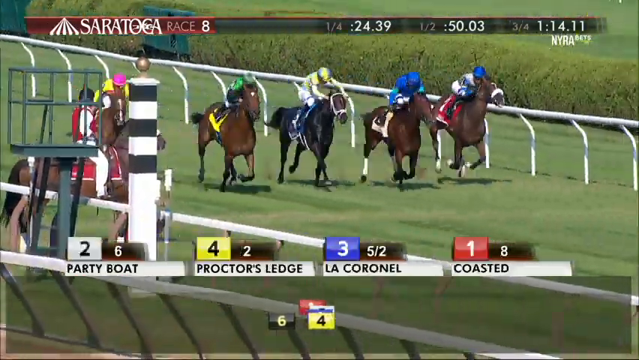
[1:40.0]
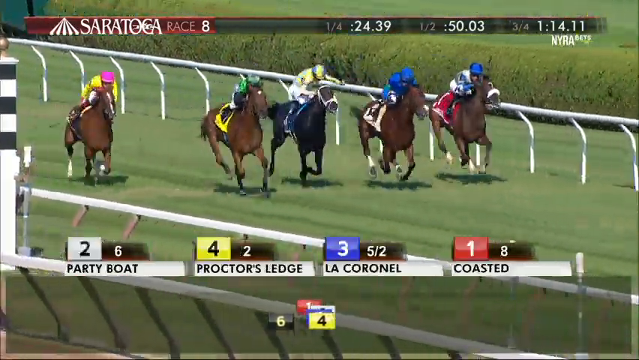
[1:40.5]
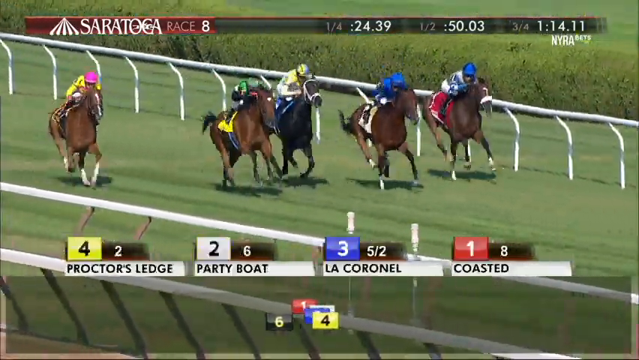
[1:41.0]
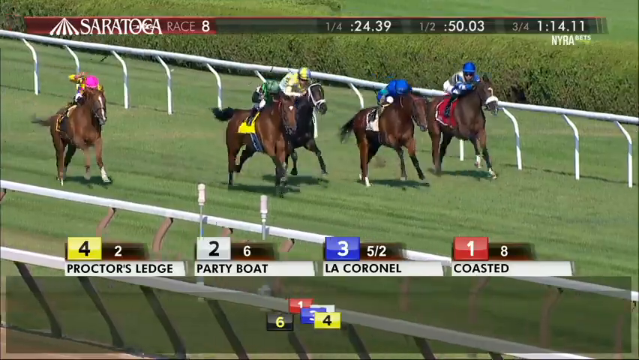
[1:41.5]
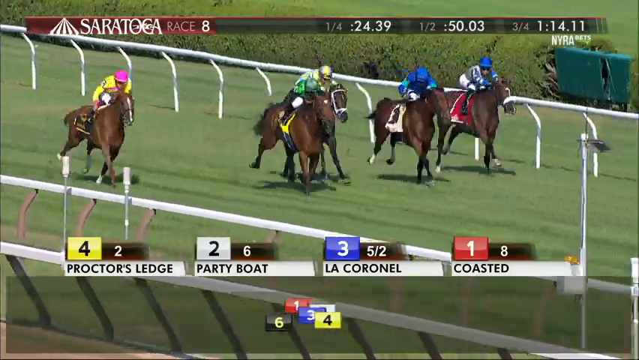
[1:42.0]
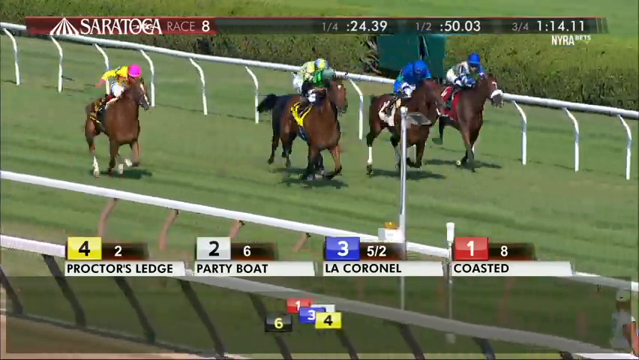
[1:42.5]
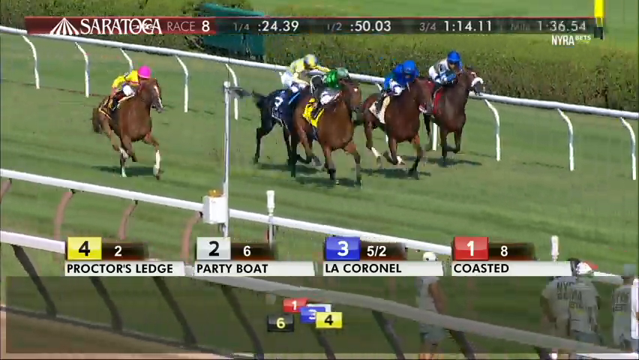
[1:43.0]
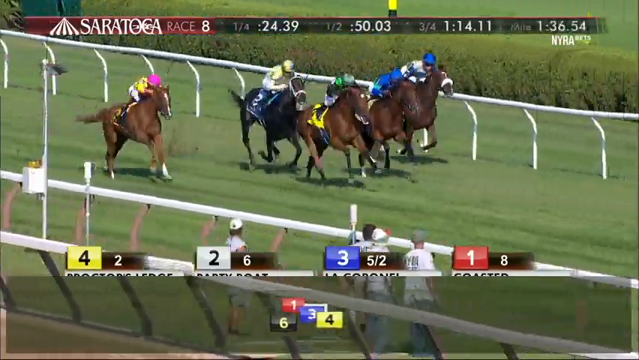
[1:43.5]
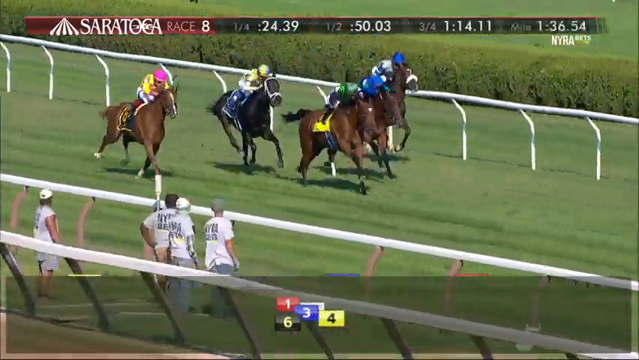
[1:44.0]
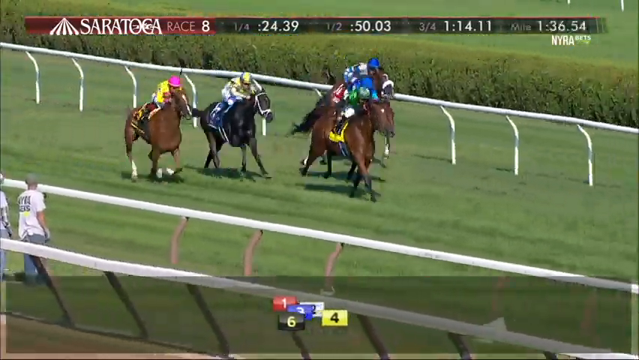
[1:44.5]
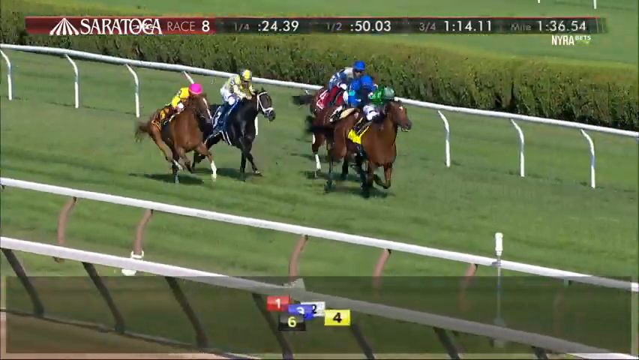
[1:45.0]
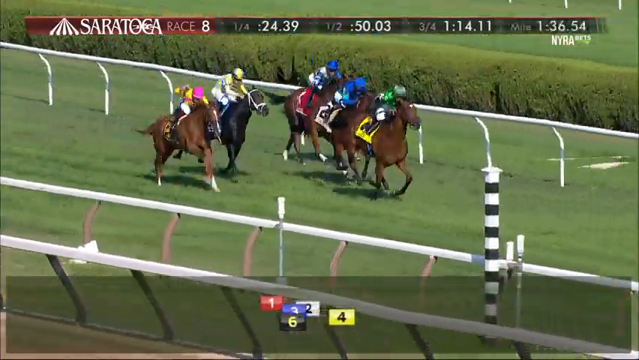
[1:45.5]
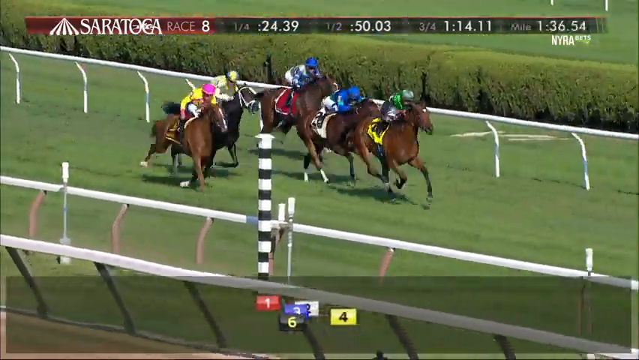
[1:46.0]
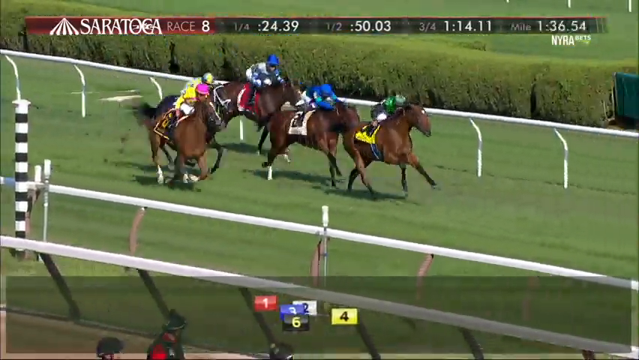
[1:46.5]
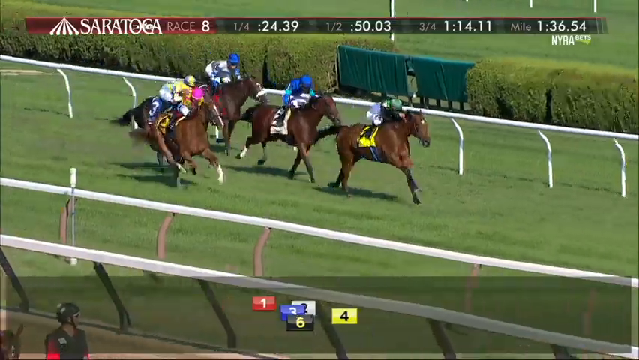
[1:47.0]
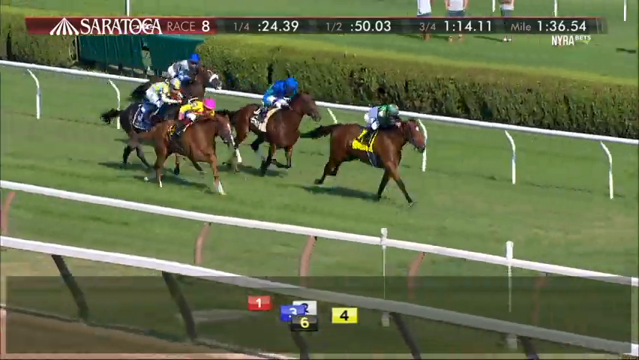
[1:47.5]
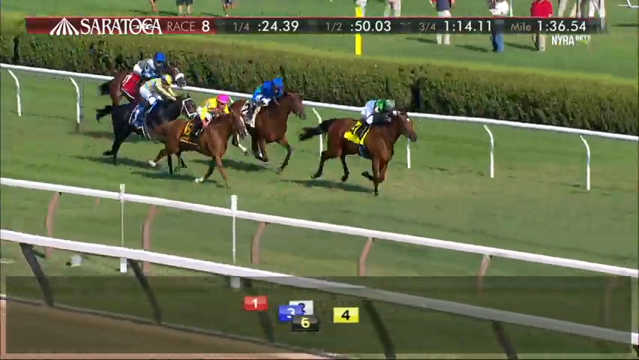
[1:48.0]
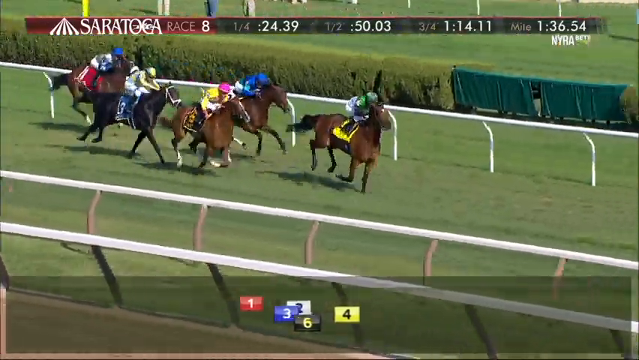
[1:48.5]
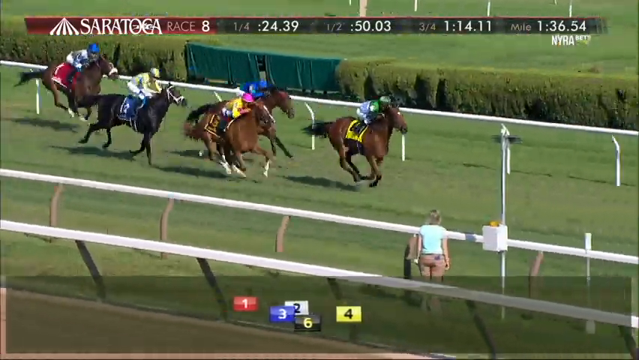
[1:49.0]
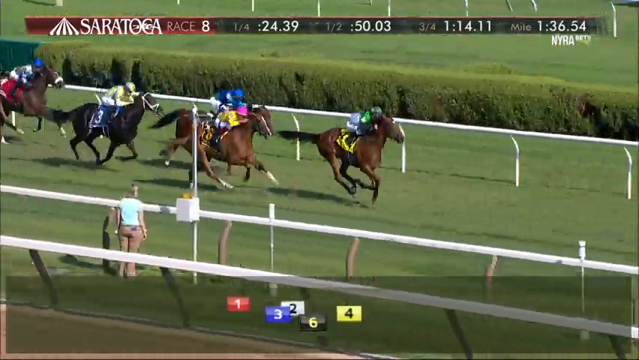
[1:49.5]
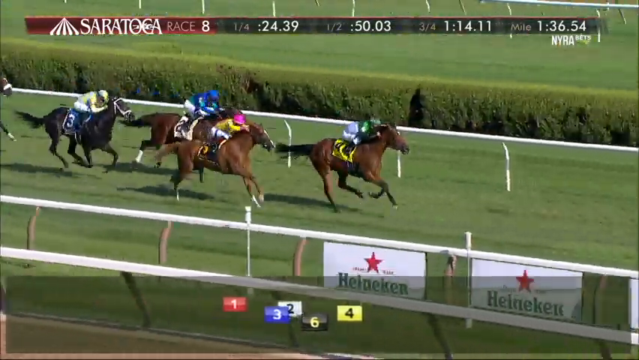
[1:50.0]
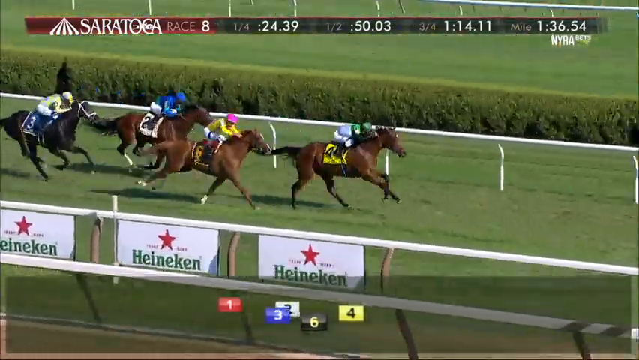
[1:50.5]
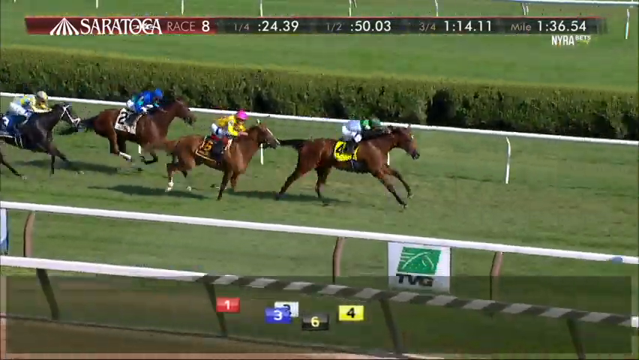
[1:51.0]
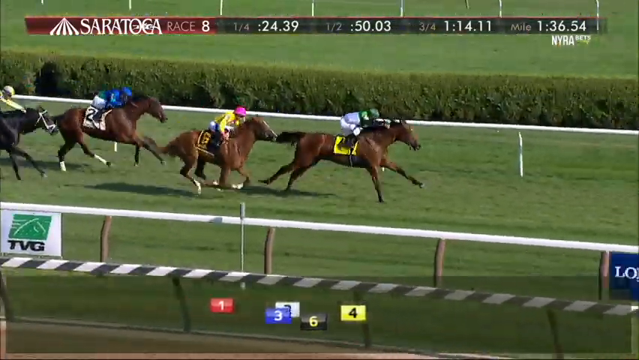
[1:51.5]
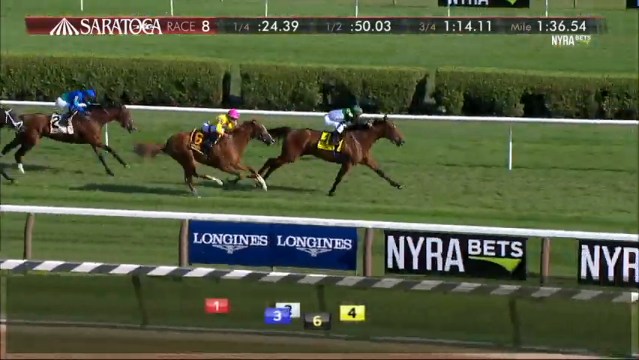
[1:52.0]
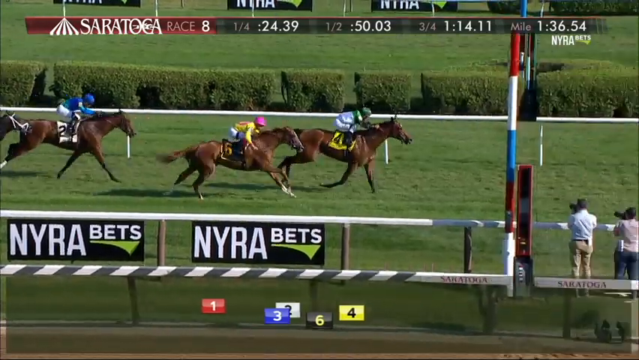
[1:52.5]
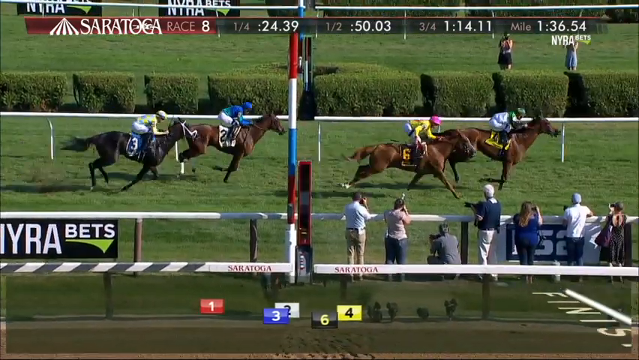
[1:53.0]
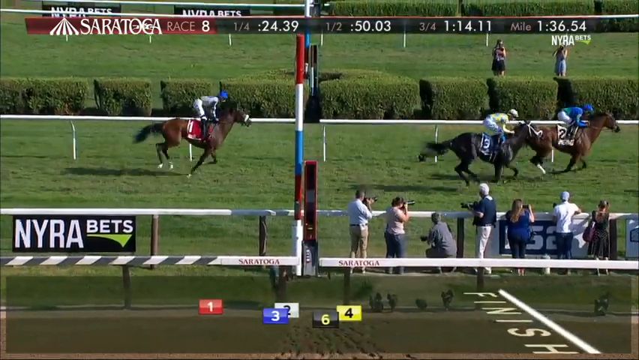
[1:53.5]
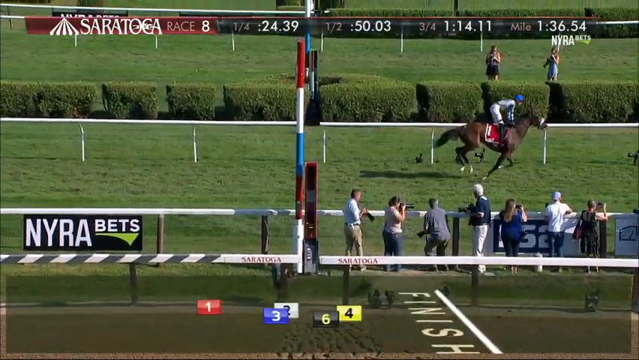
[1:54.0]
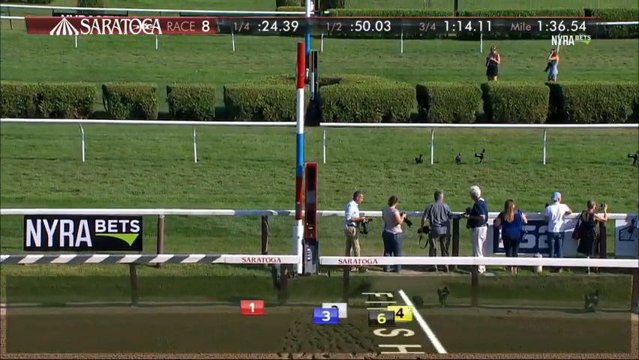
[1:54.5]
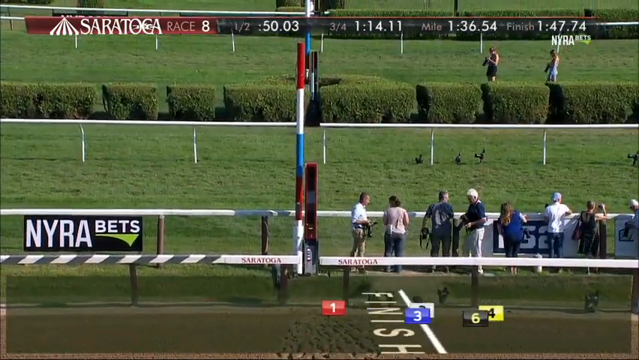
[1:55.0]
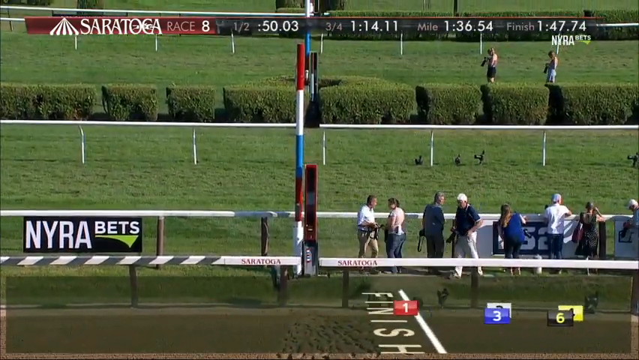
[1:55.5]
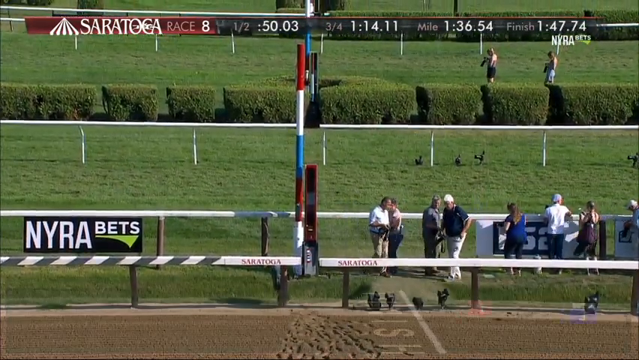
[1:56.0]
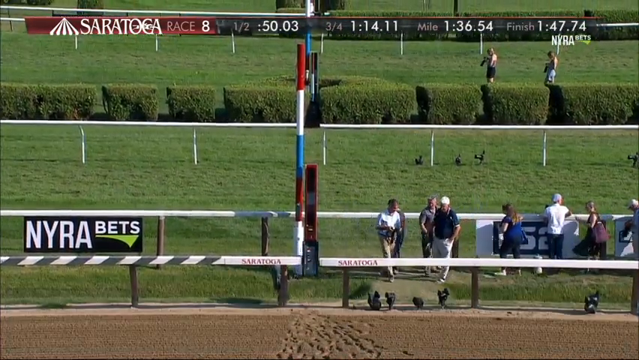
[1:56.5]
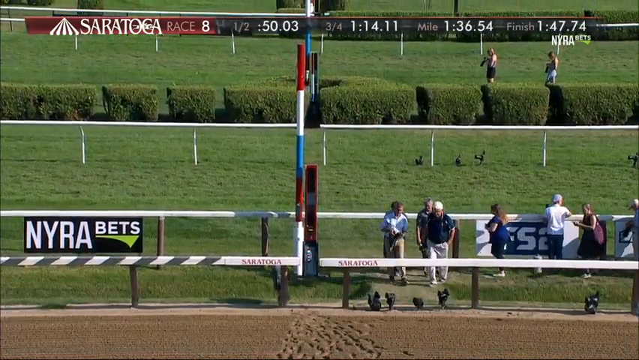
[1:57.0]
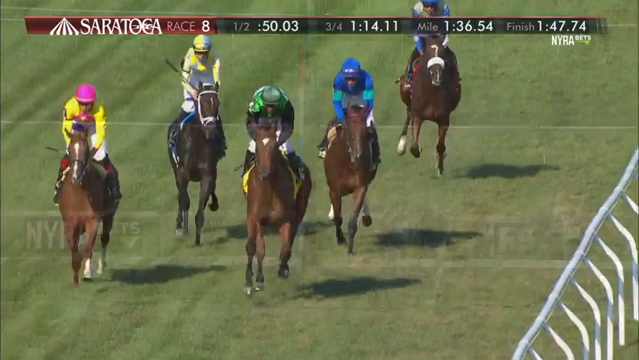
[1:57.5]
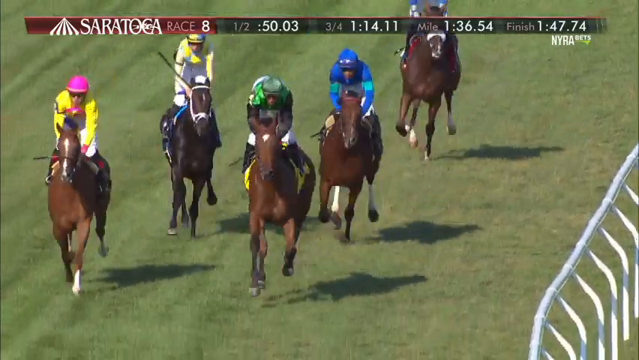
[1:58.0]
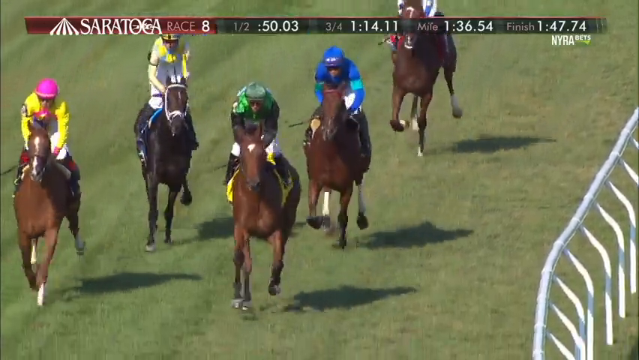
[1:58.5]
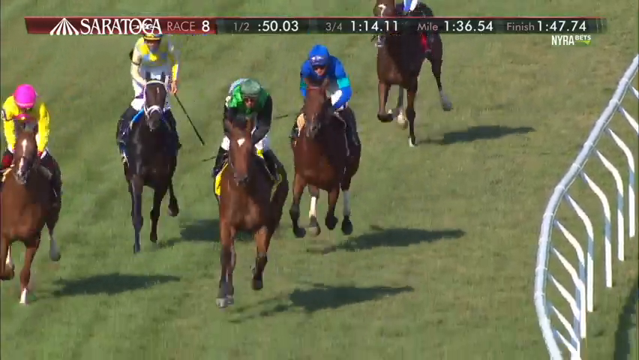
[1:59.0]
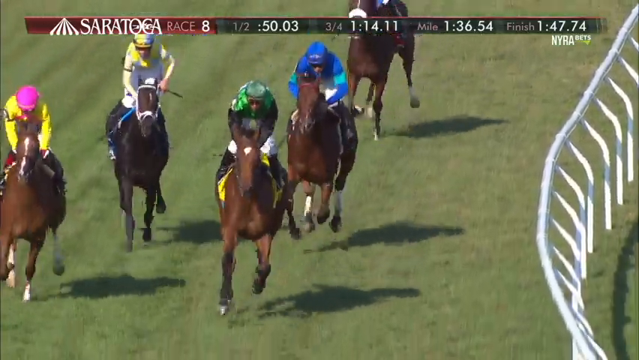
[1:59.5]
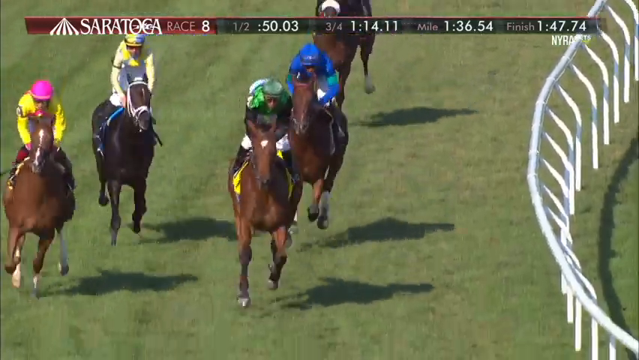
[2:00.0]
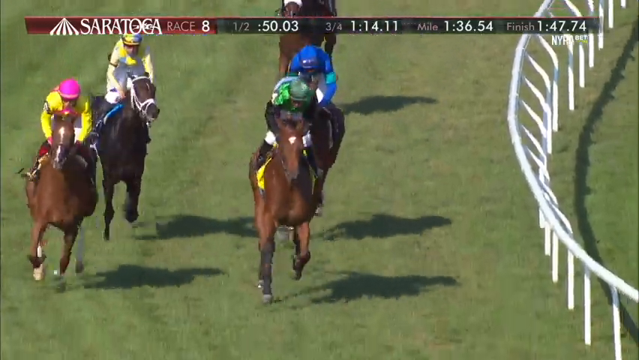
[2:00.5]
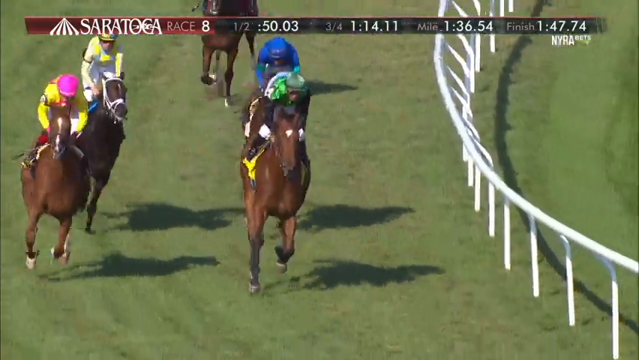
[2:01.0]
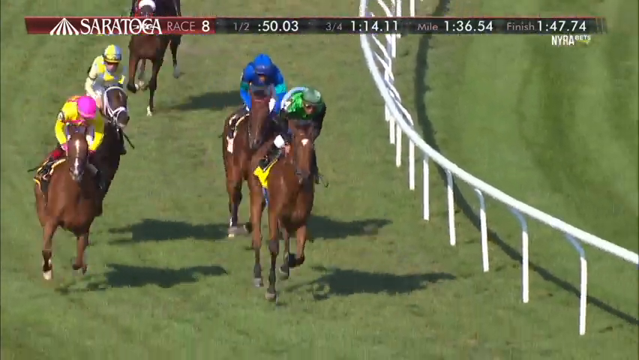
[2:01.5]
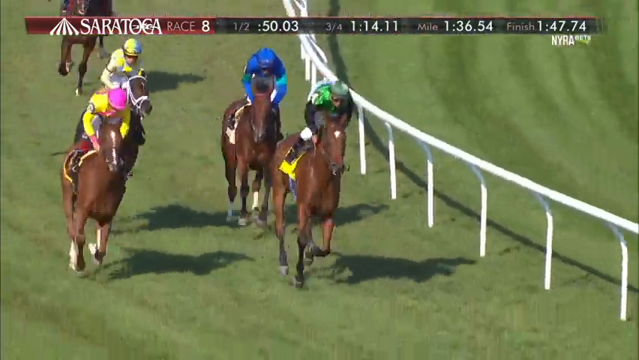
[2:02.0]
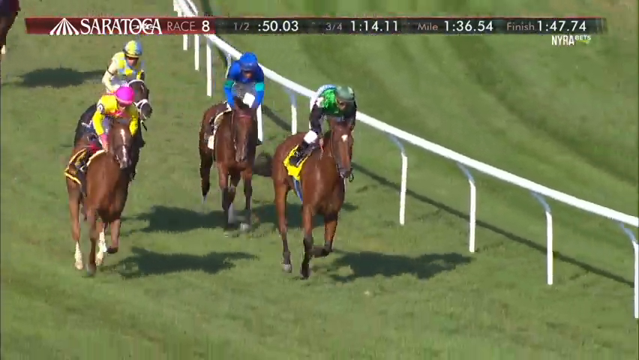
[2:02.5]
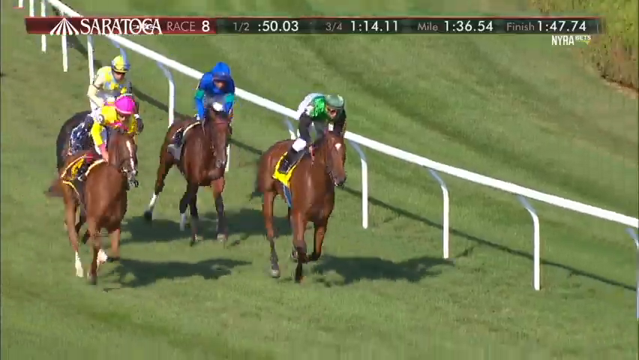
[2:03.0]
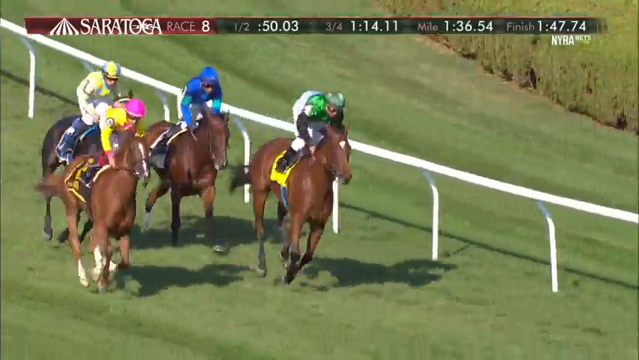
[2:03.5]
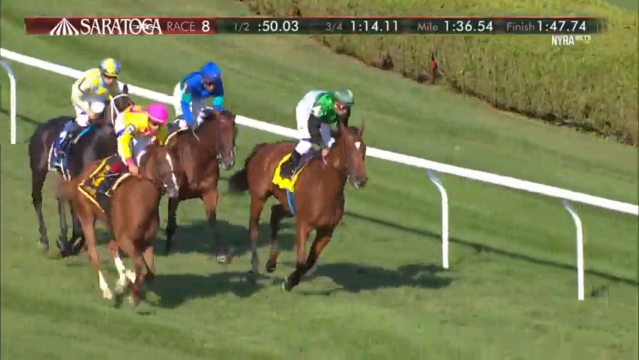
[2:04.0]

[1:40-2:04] The horses come down the stretch, all very close together, with the jockeys using the stick to hit their horses. The graphics at the bottom show horse number four apparently slightly leading the pack, with horse number six in second. Third place is hard to make out, but it looks like horse number two barely beats horse number three for third.